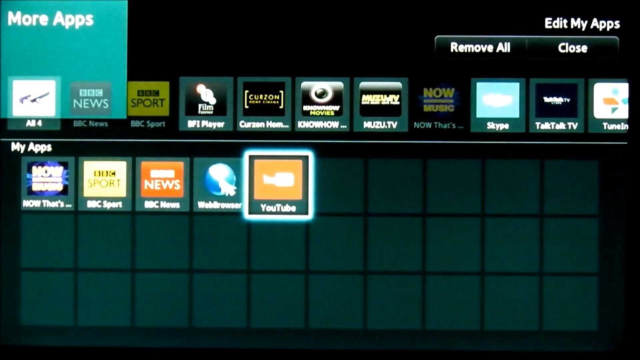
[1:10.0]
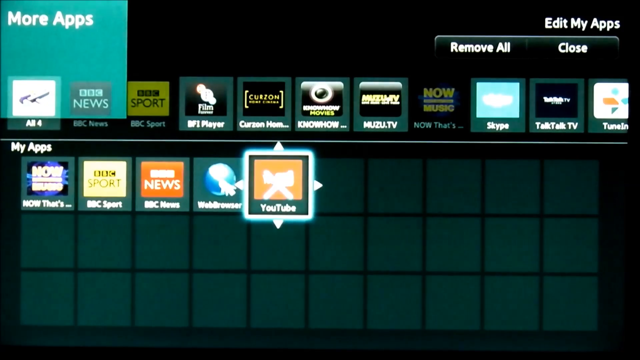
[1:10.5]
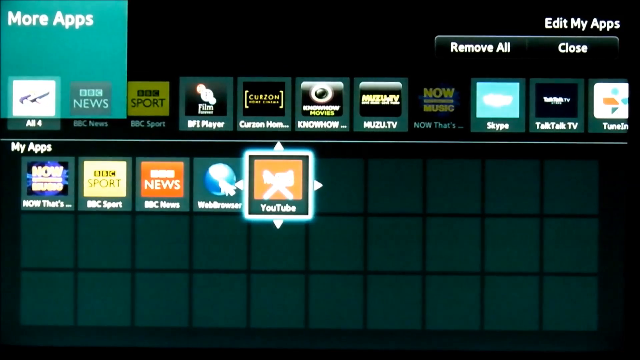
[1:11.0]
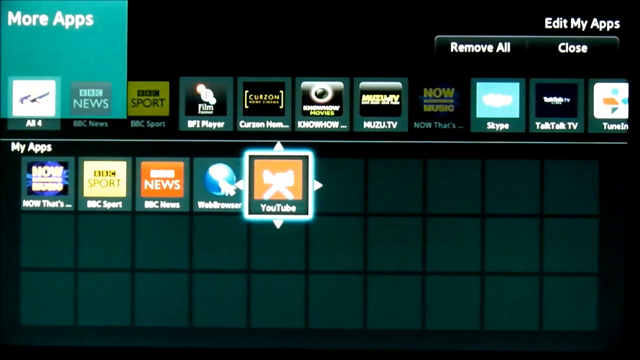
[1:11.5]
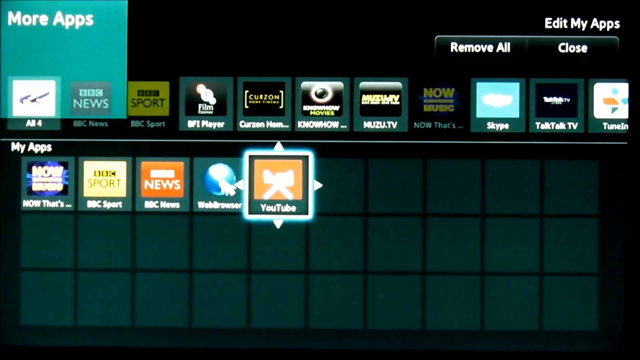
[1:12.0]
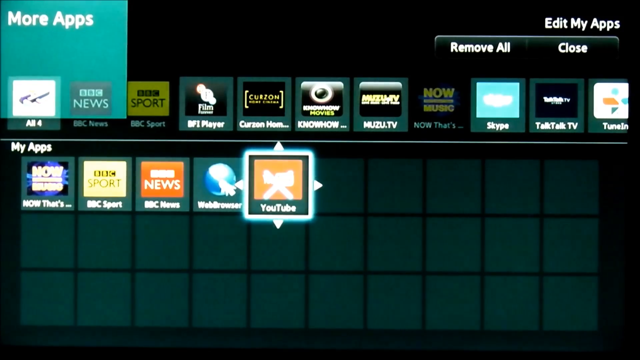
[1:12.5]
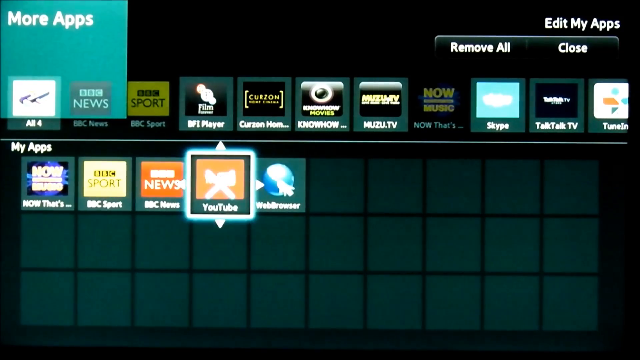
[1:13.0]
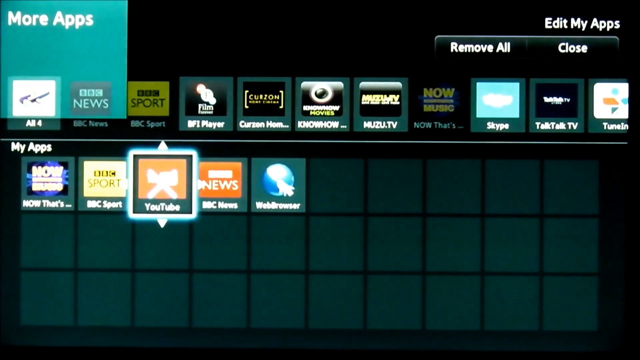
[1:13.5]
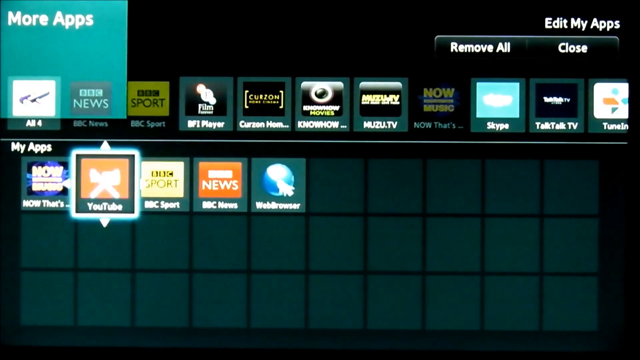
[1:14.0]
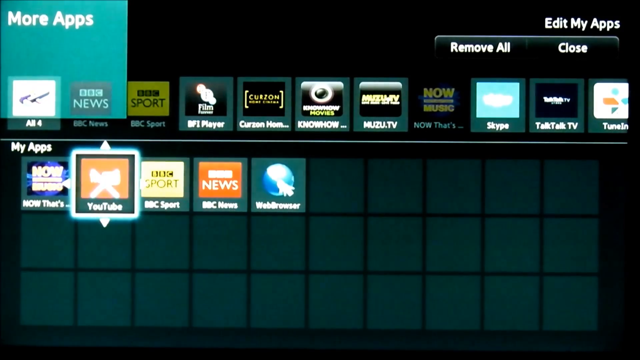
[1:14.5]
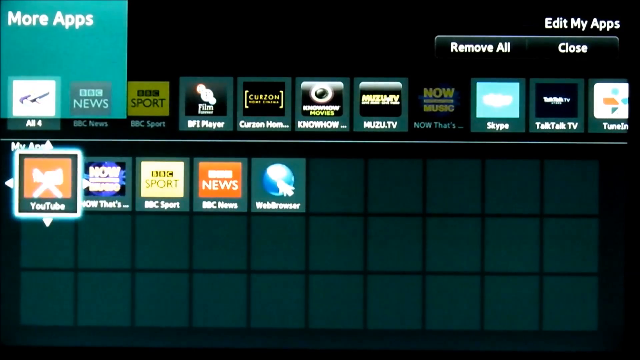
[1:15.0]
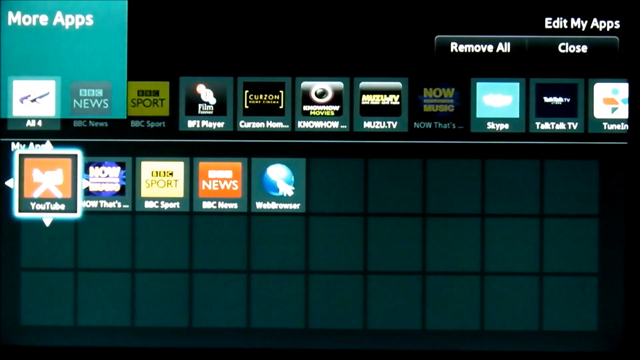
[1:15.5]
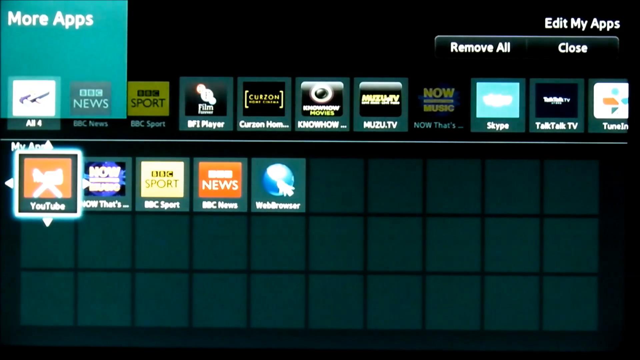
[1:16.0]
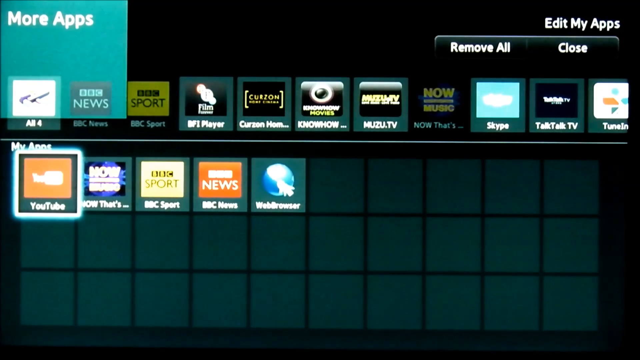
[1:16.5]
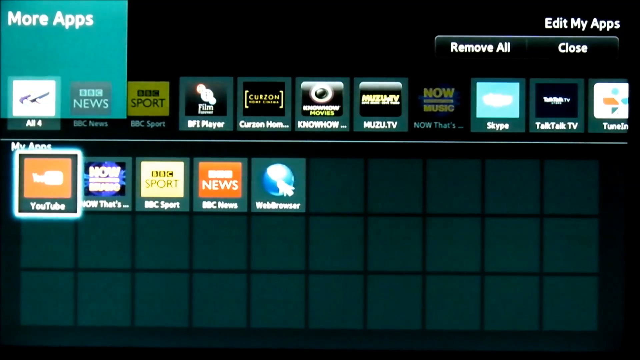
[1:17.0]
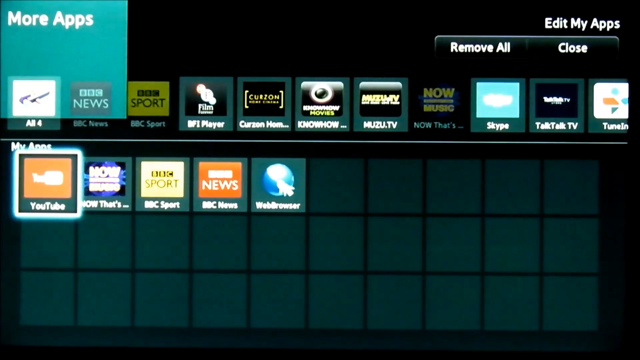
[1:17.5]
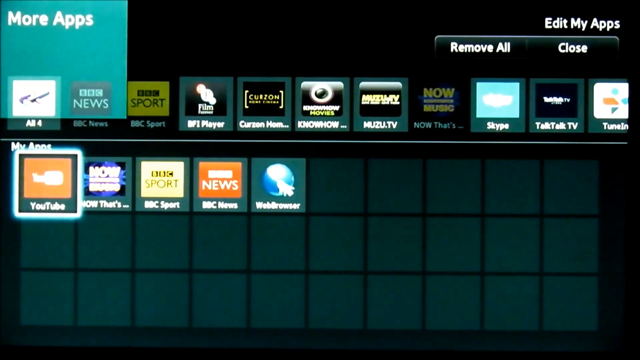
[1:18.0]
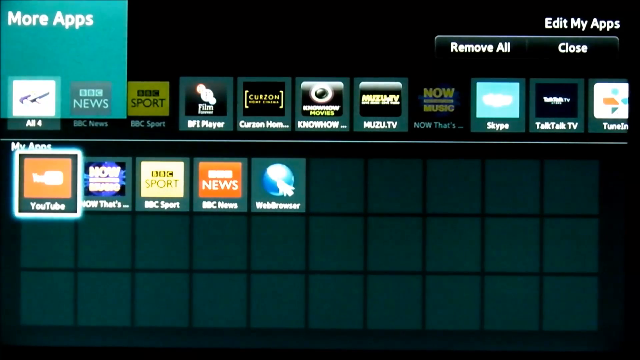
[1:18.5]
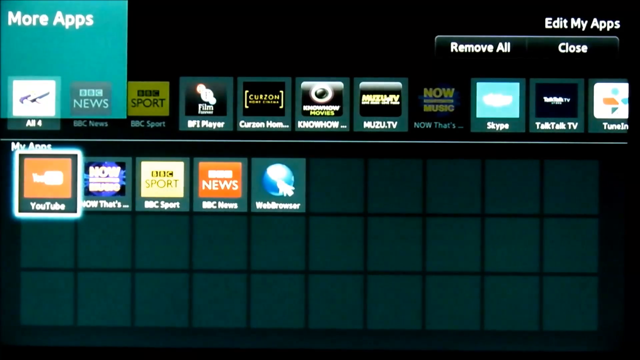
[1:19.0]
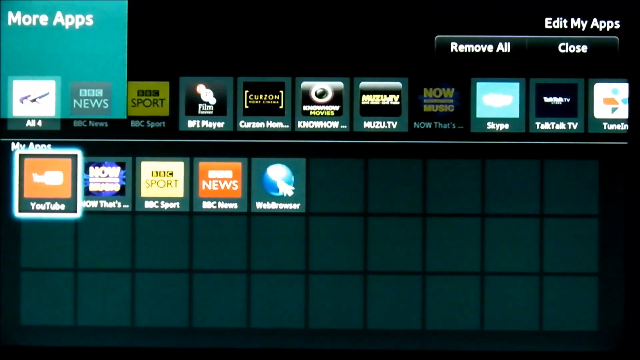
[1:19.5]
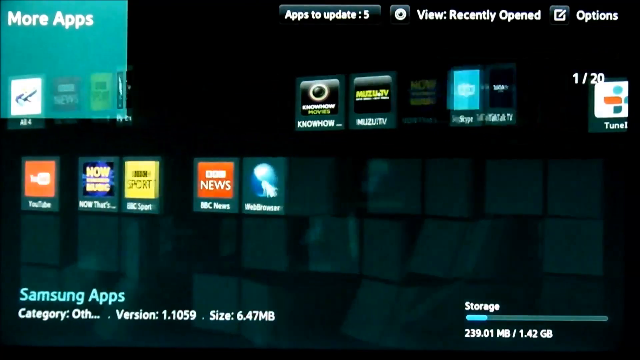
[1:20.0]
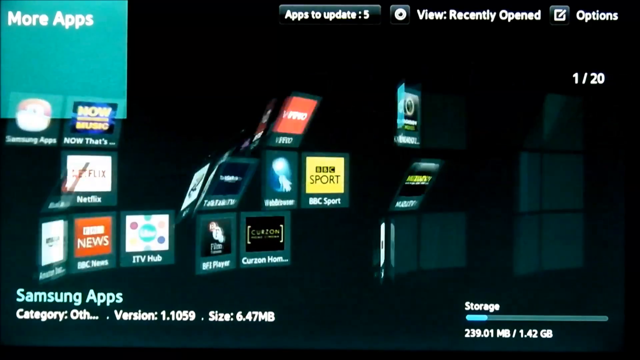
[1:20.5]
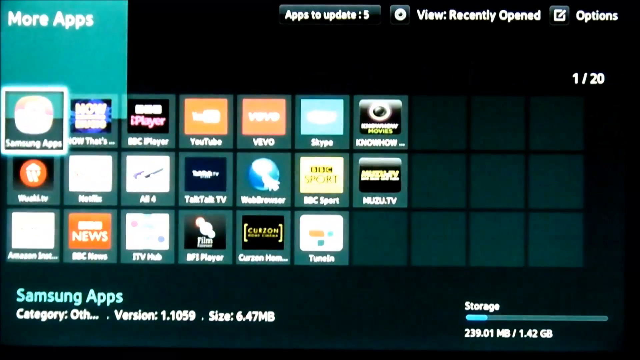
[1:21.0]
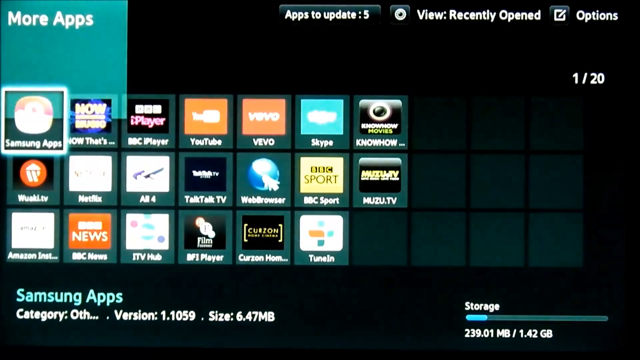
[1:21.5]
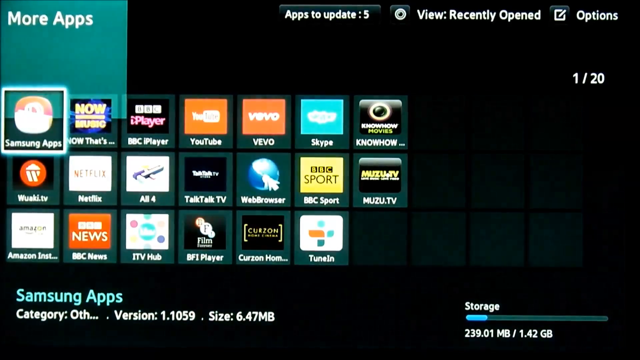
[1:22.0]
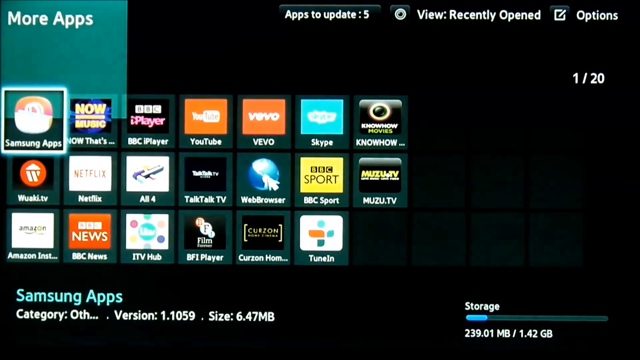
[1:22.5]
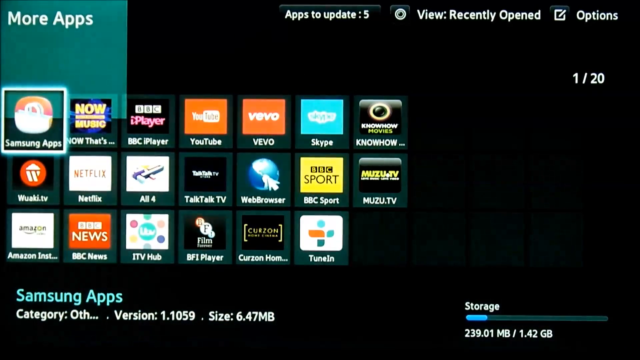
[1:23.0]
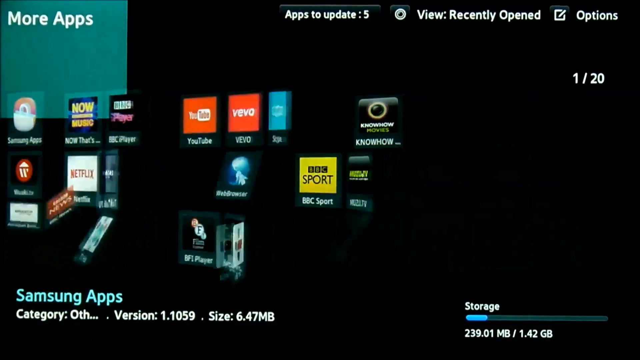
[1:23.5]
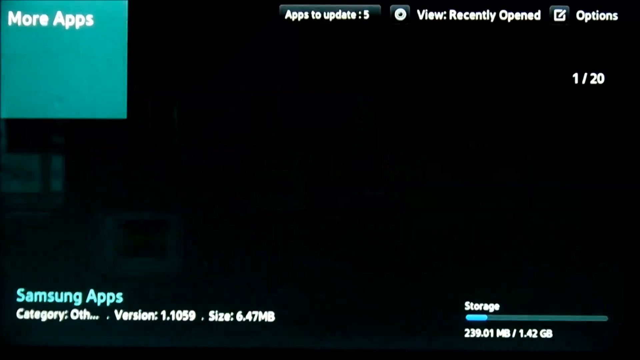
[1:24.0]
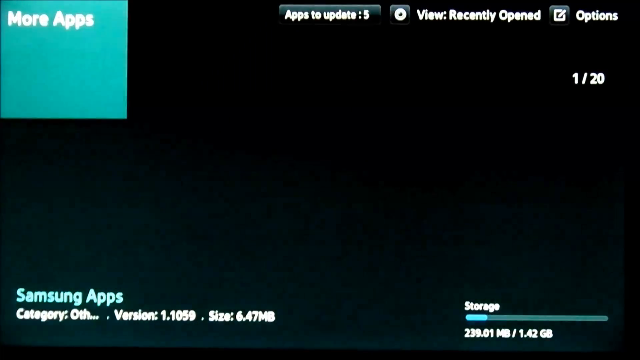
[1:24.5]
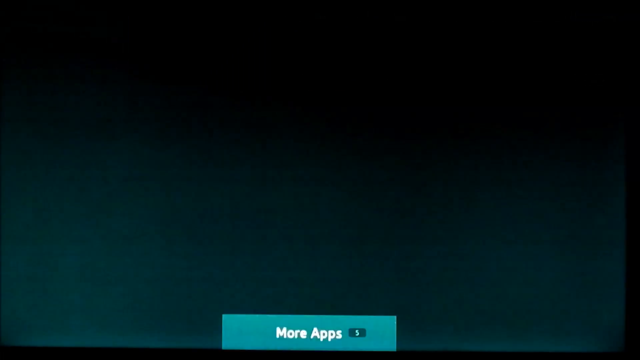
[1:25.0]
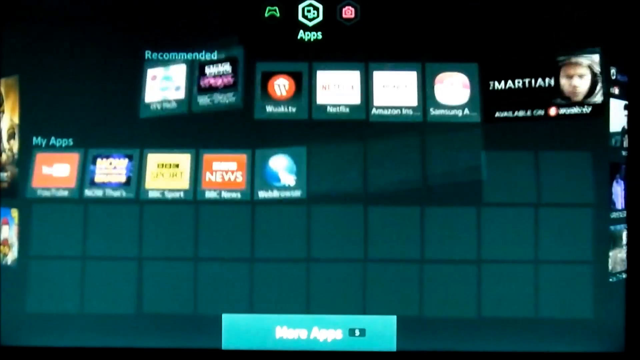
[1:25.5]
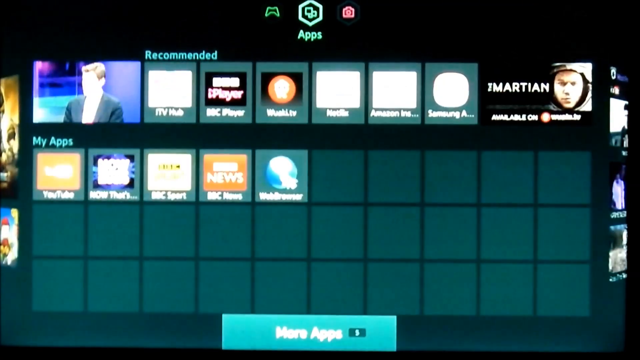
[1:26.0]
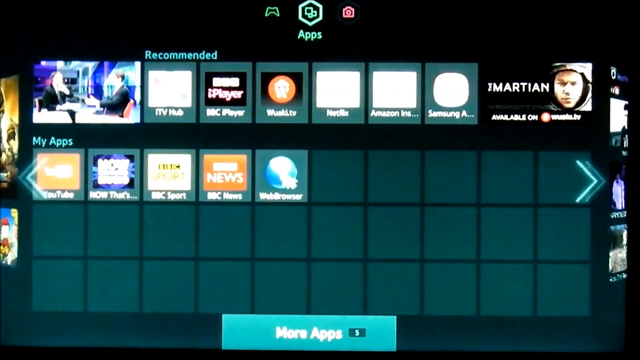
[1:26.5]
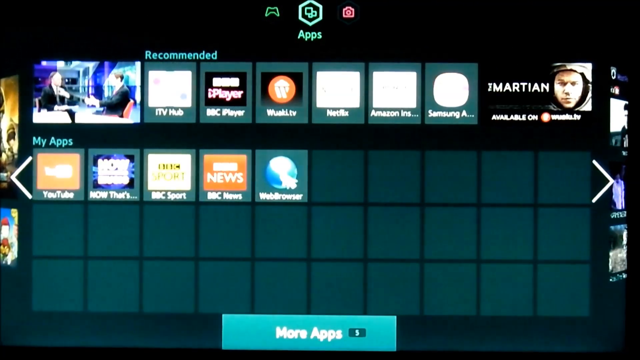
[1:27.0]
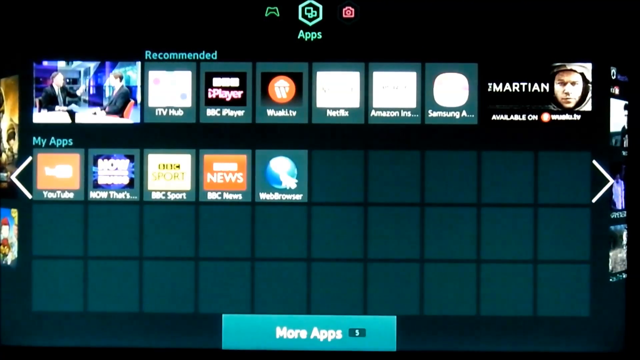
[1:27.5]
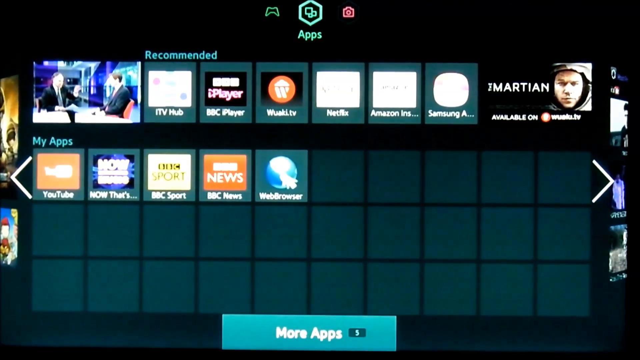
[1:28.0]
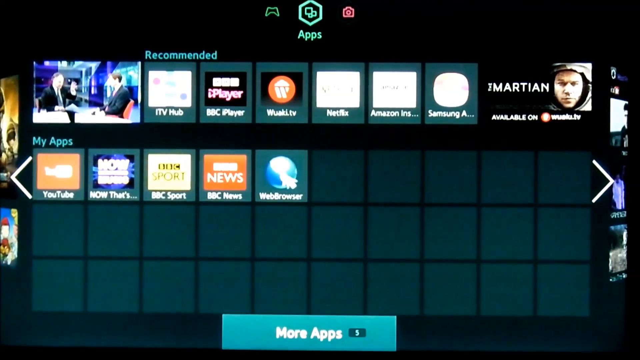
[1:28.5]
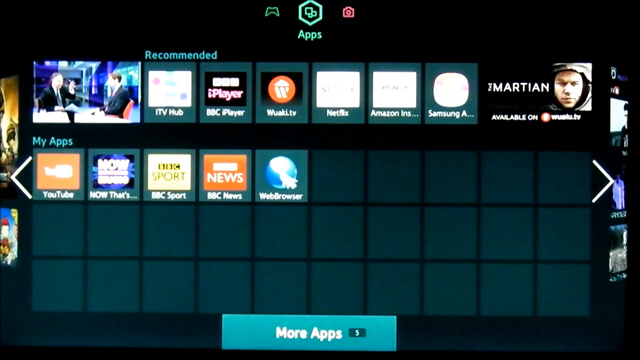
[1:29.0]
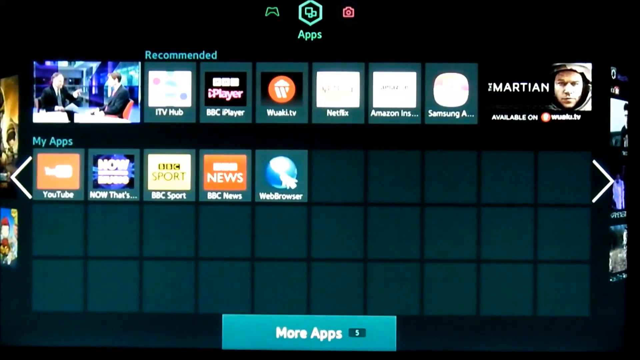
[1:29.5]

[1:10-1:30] The YouTube icon looks to have been clicked, and arrows pointing from each side appear. The icon is dragged further along the line until it is in first place in the My Apps section. When the screen changes, the icons move away with a flicking movement that looks almost like pages turning. A larger screen shows 20 apps altogether, including YouTube, and another page-turning movement follows. The view returns to the My Apps screen, where something is happening in the top left-hand corner, looking like maybe a news programme playing. Something in the background of the My Apps screen looks like possibly screenshots from various shows or movies. At the top it reads "Apps", with three icons: one looks like a games console controller, one is a glowing hexagon with something in the centre, and one looks like a camera.